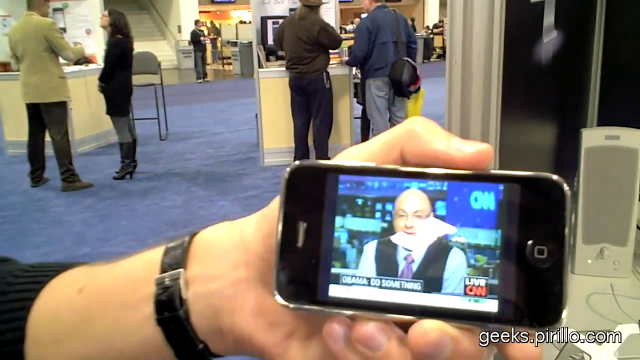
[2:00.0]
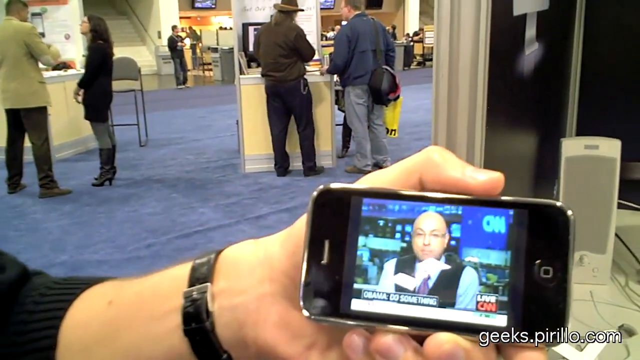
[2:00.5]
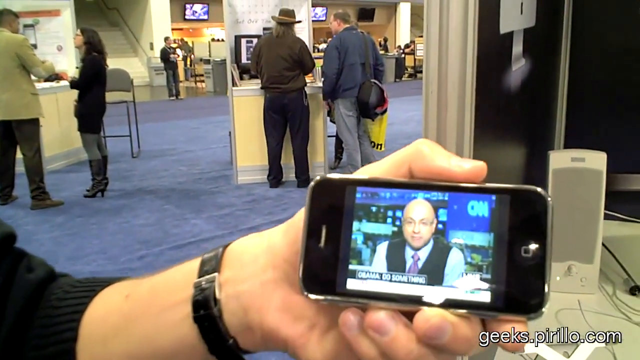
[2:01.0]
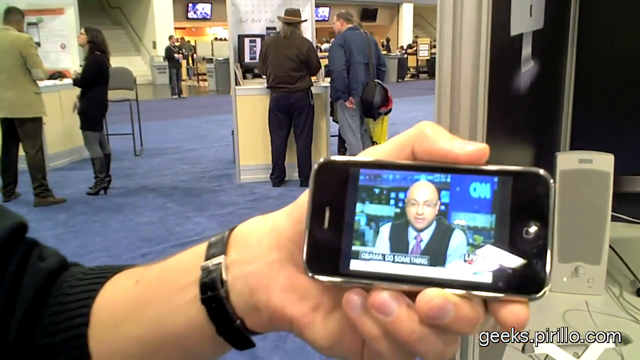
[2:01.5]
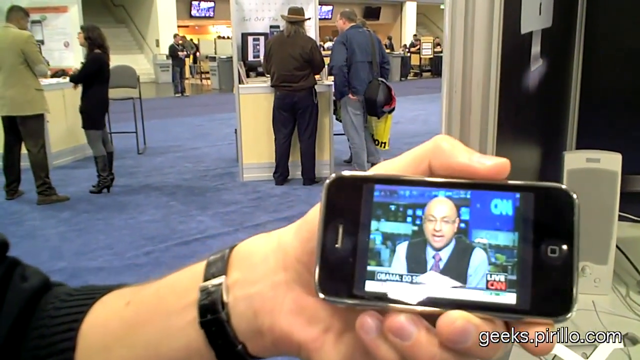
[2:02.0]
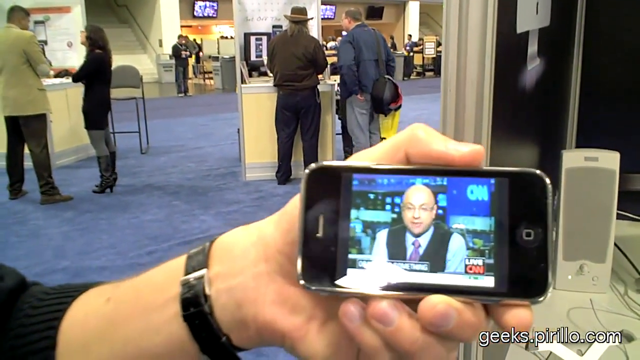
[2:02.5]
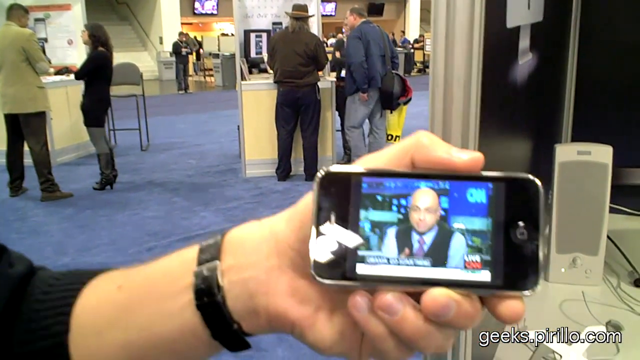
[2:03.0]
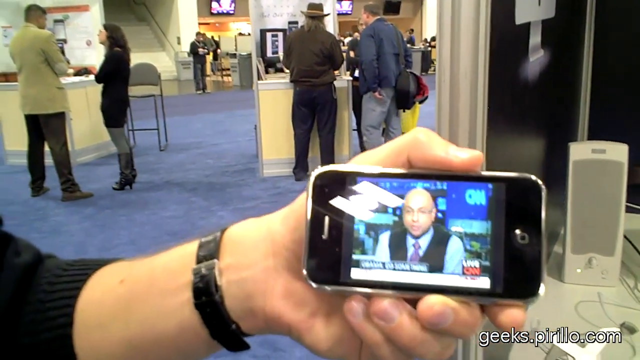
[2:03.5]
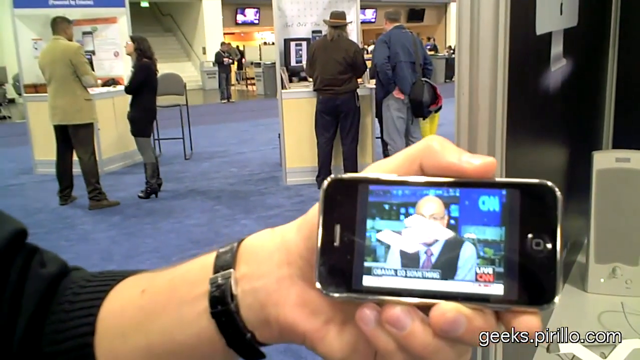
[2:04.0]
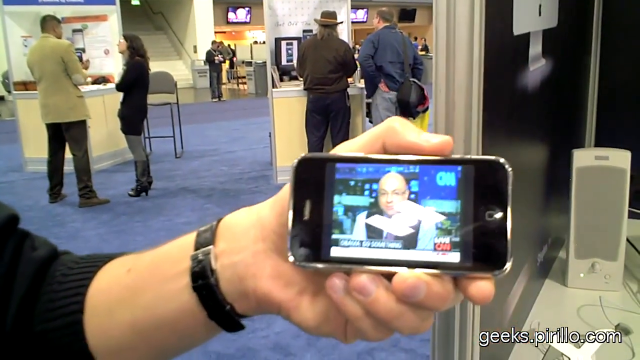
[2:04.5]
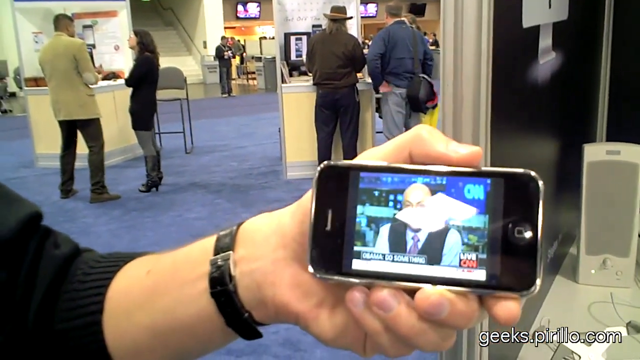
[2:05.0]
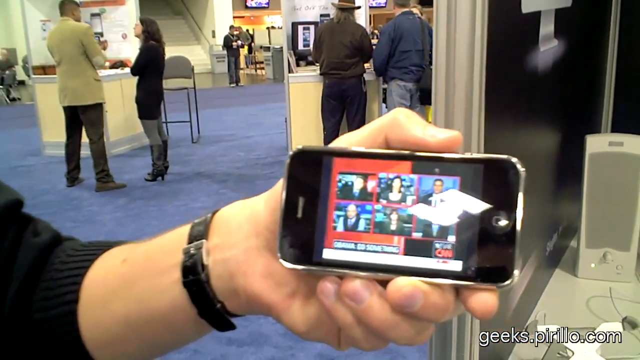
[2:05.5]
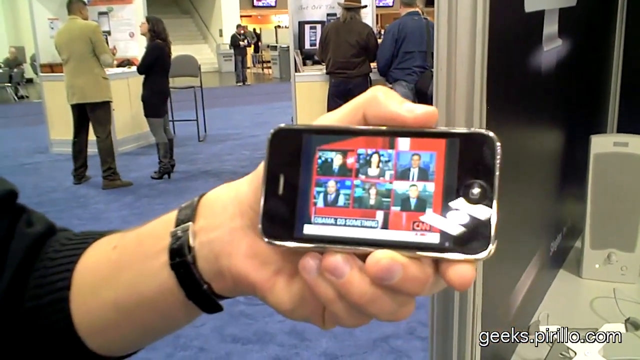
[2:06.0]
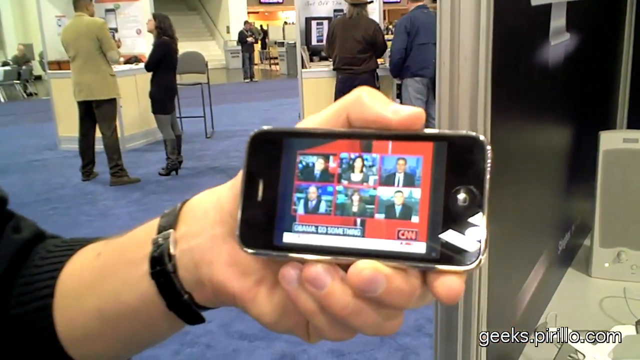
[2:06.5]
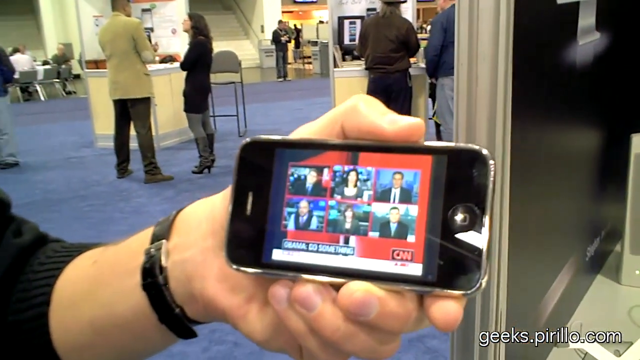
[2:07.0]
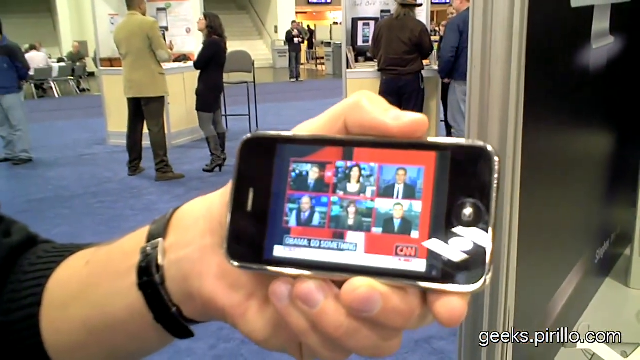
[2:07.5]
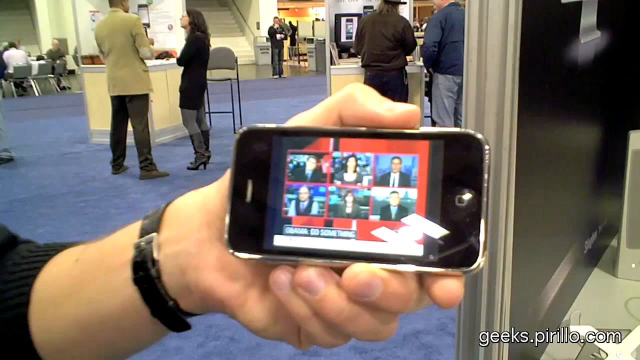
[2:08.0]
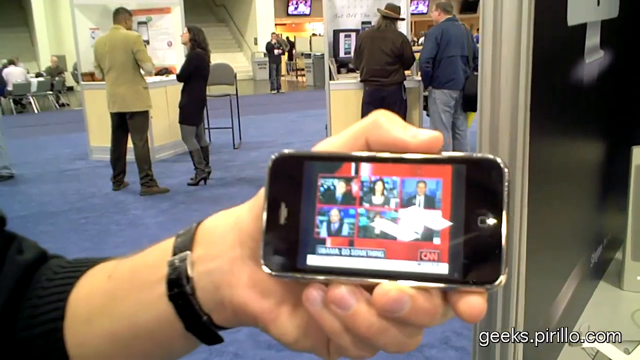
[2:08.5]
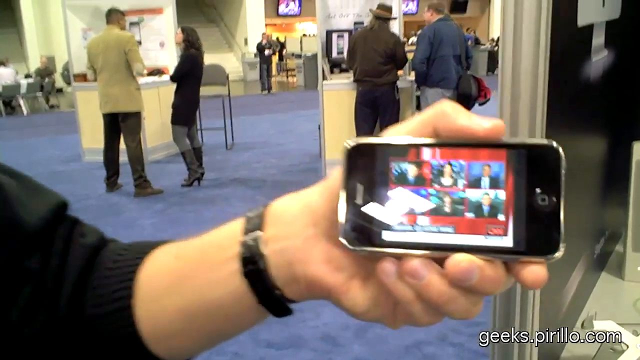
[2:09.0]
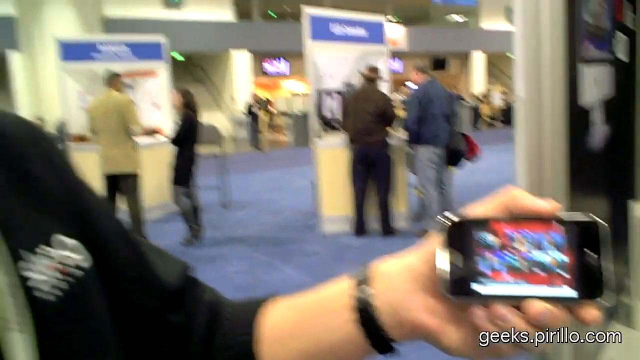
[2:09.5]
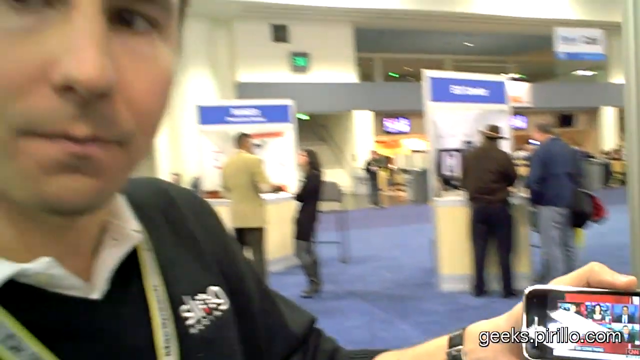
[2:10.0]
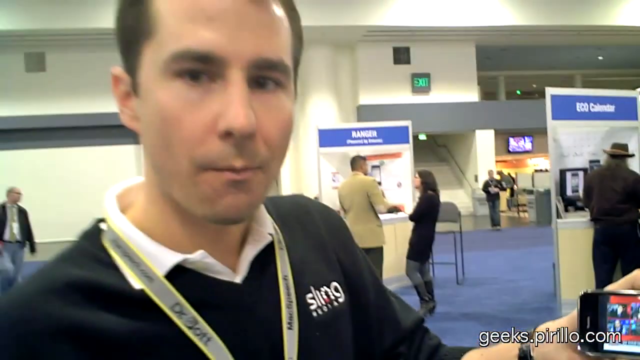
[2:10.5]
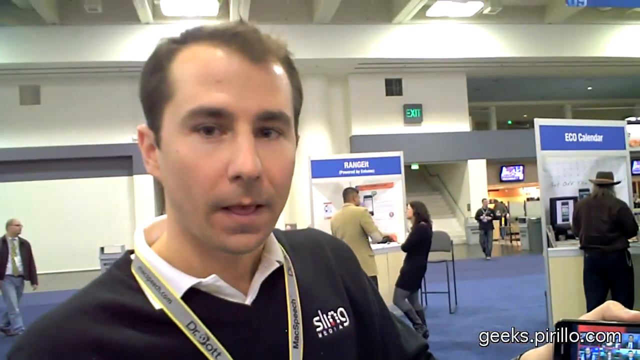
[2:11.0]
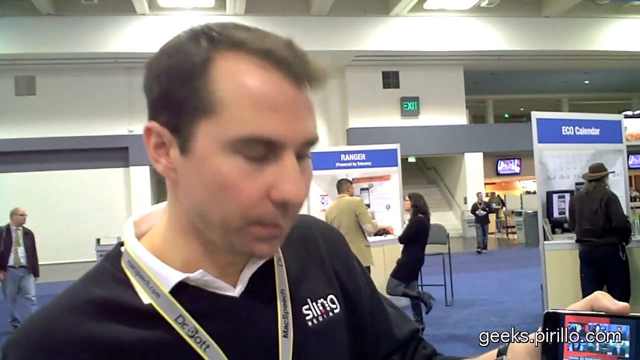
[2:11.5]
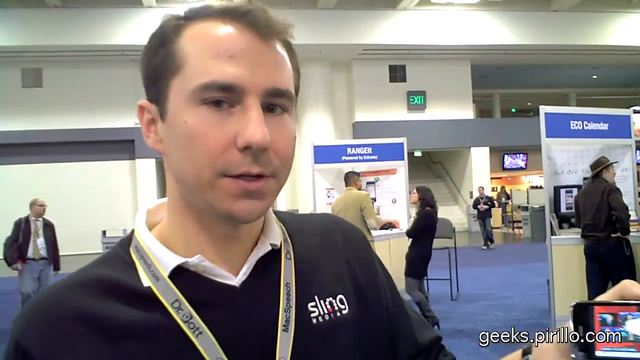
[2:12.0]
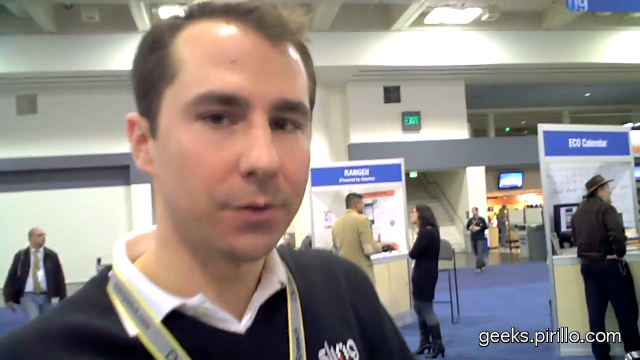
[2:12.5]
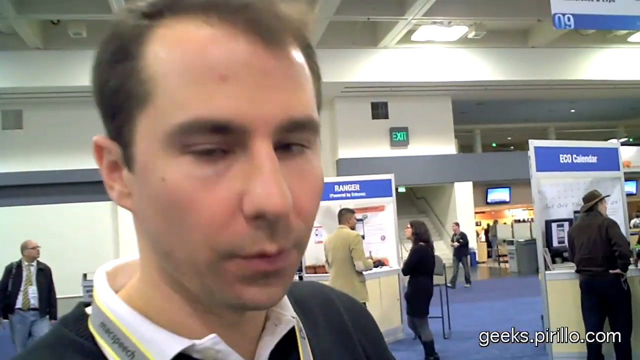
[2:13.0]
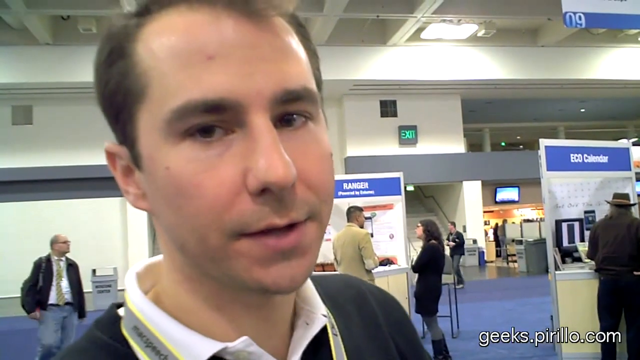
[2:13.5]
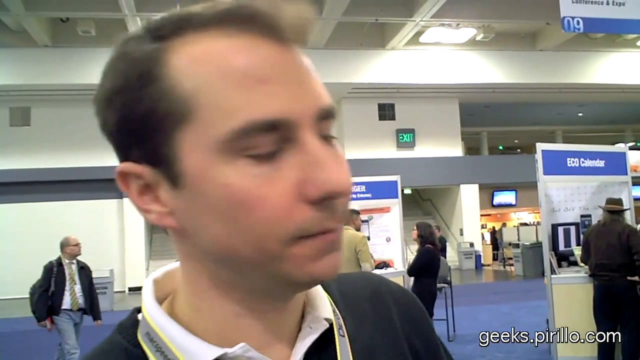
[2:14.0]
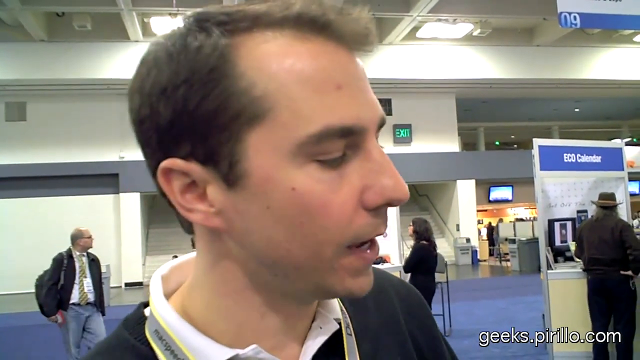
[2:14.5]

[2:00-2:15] The iPhone, held vertically, shows the CNN broadcast airing, with a reflection from the lights on its screen. The man appears to be explaining something, and the phone moves a little rather than staying still. The camera pans out to show the face of the man holding the iPhone; he is chewing gum, nods his head, and speaks. Near the end, thumbnails of other videos to watch on the YouTube channel appear, and the channel owner's logo is shown very briefly.